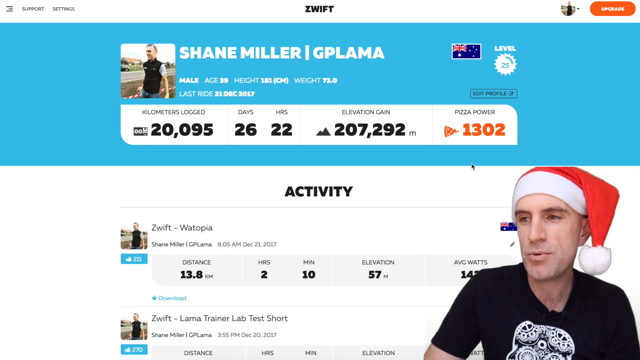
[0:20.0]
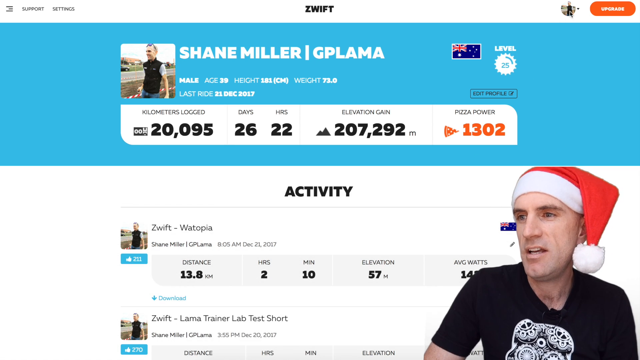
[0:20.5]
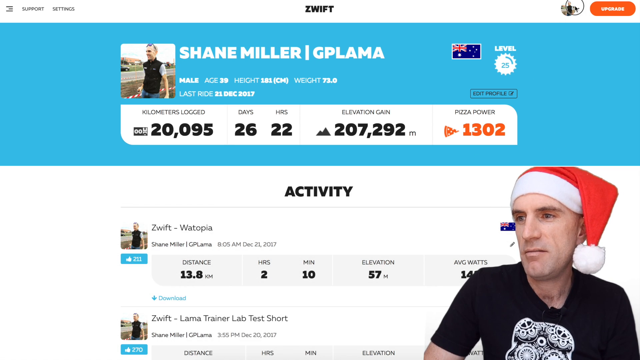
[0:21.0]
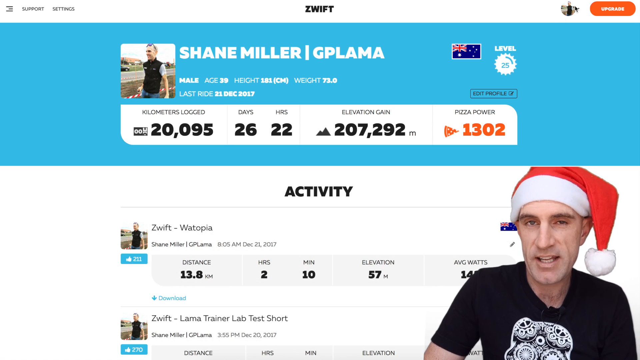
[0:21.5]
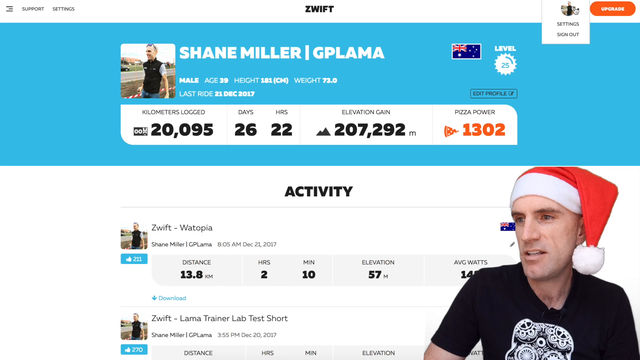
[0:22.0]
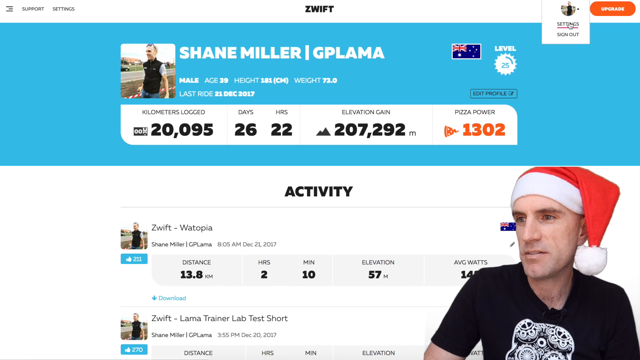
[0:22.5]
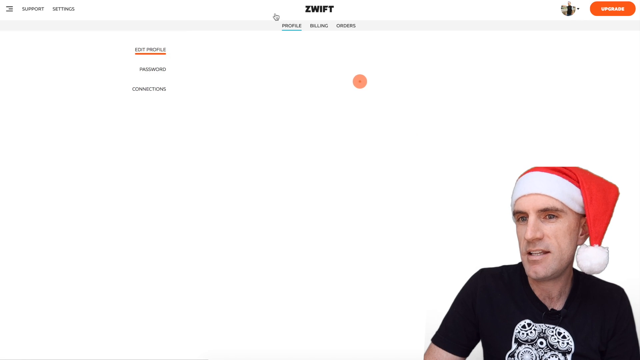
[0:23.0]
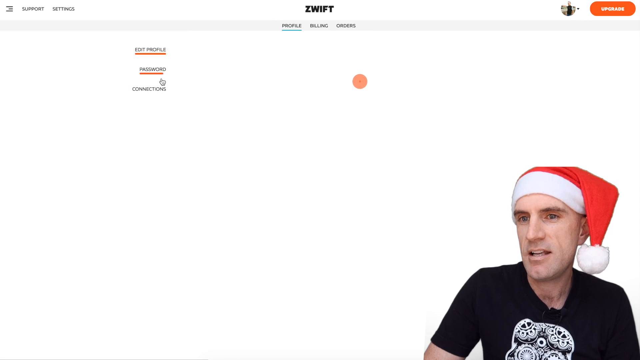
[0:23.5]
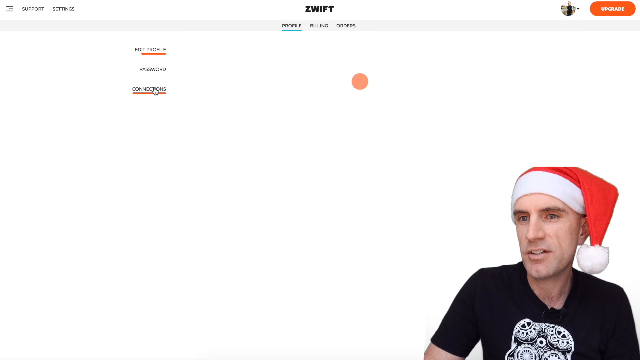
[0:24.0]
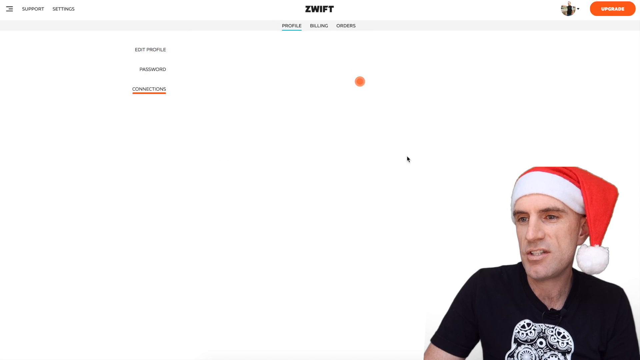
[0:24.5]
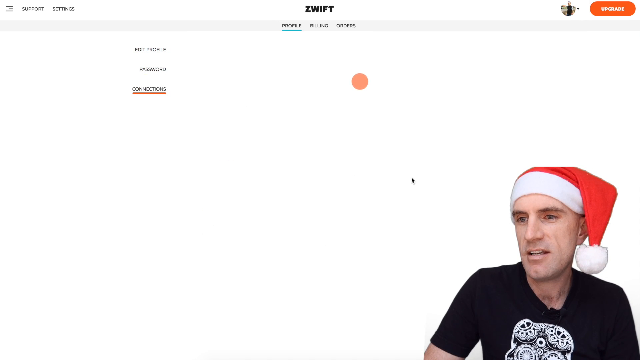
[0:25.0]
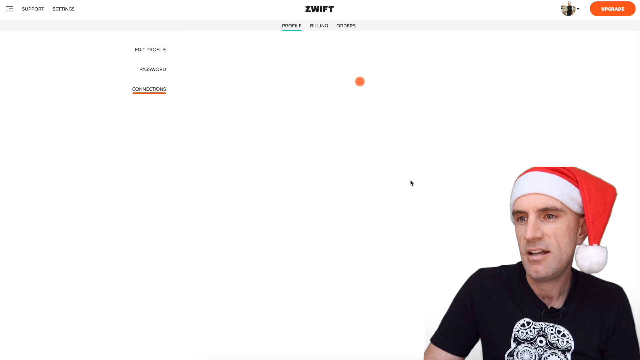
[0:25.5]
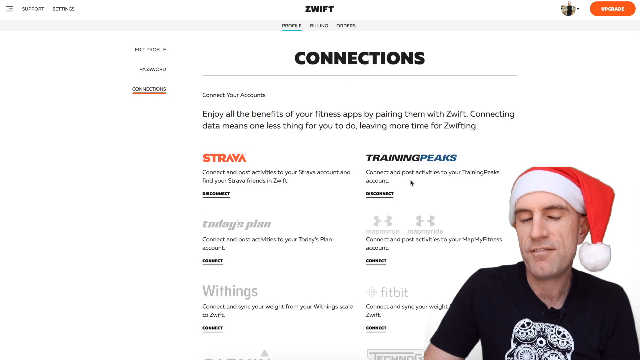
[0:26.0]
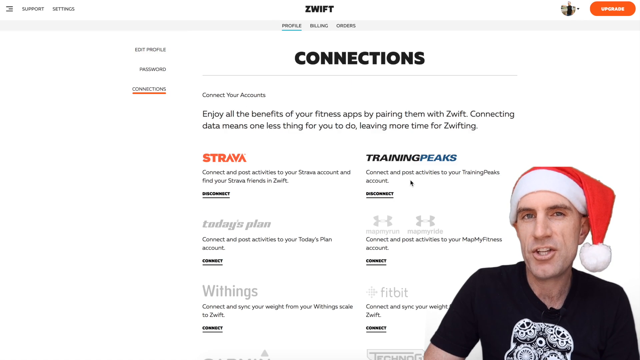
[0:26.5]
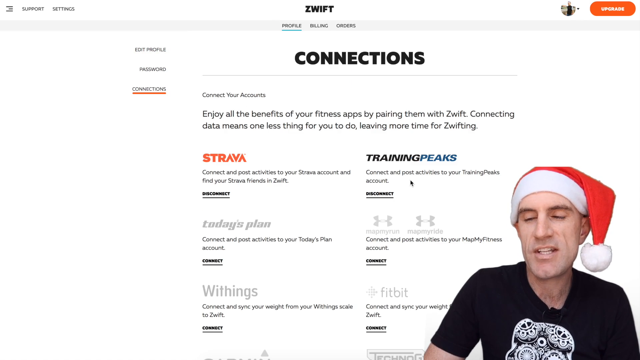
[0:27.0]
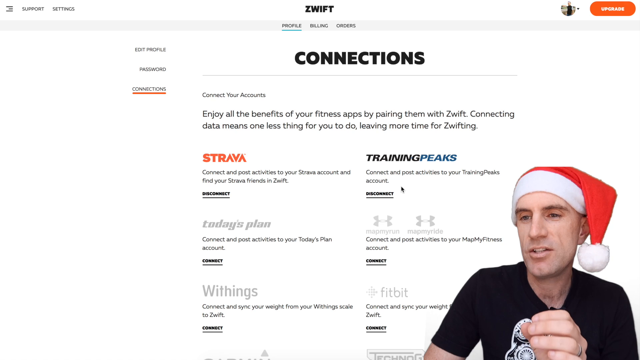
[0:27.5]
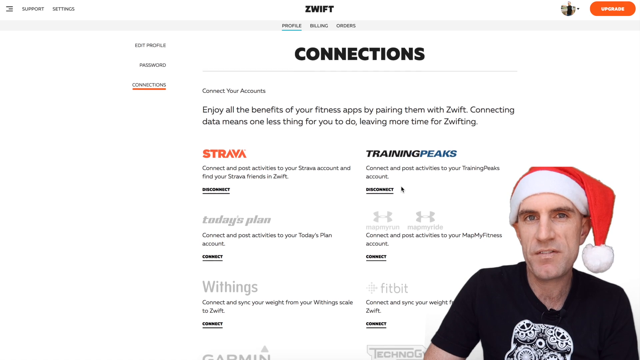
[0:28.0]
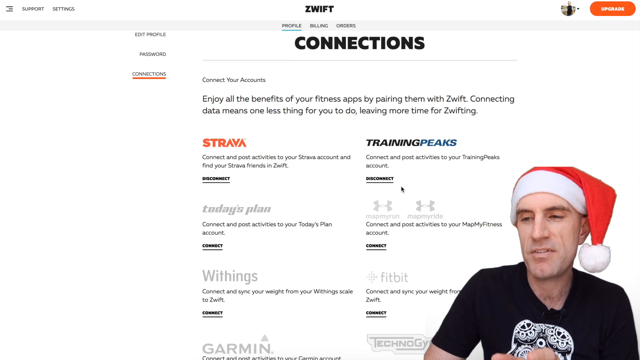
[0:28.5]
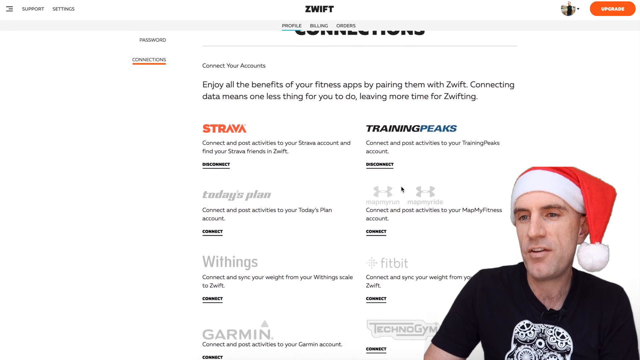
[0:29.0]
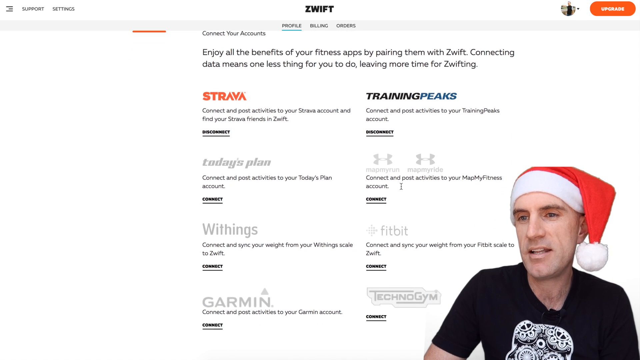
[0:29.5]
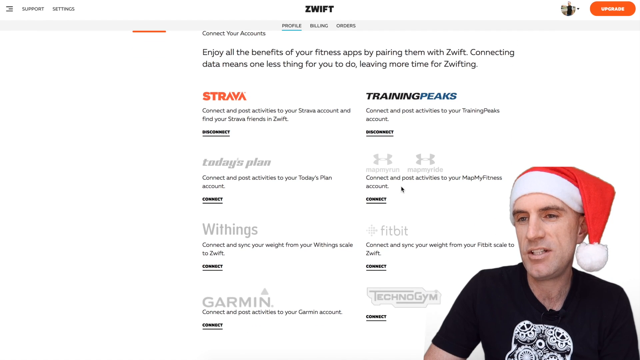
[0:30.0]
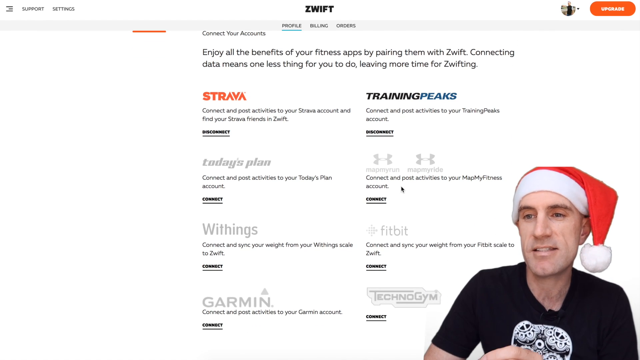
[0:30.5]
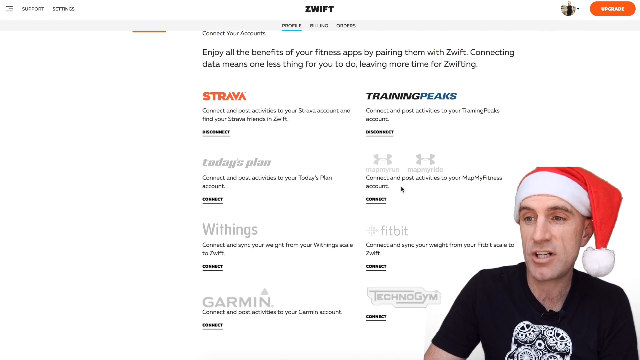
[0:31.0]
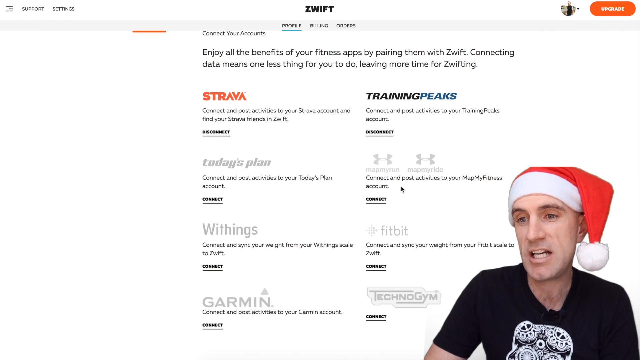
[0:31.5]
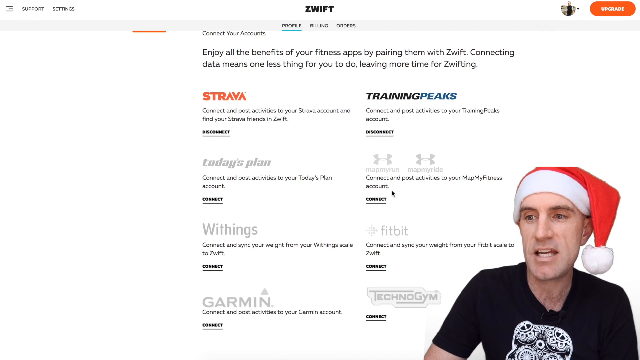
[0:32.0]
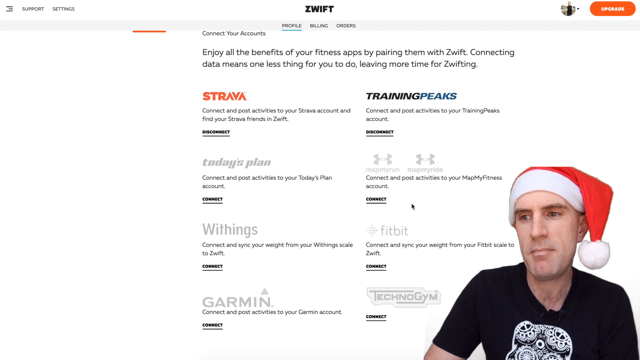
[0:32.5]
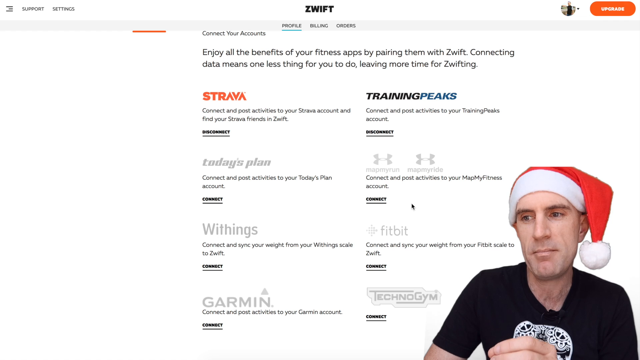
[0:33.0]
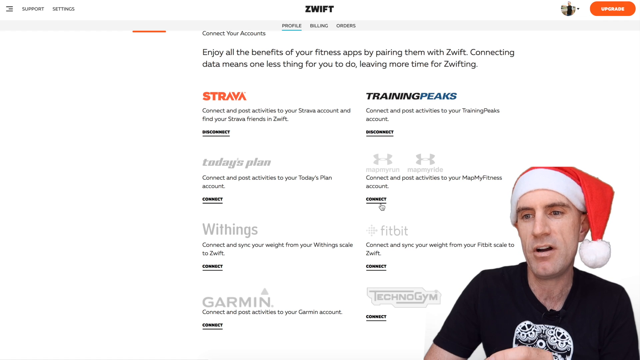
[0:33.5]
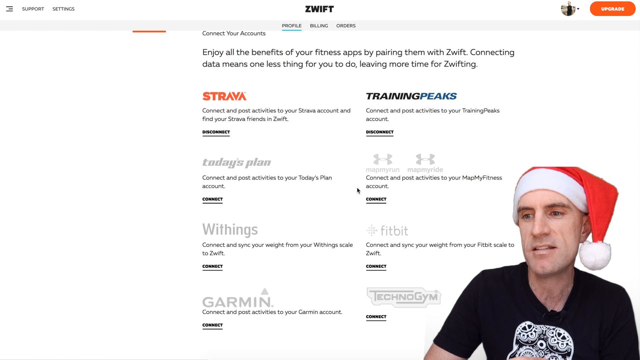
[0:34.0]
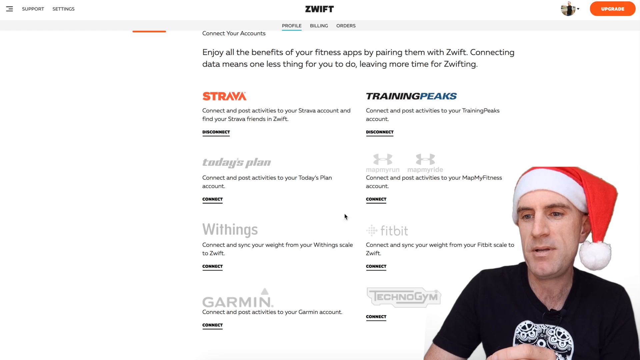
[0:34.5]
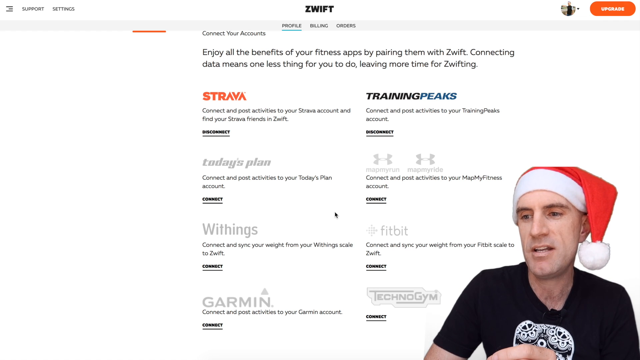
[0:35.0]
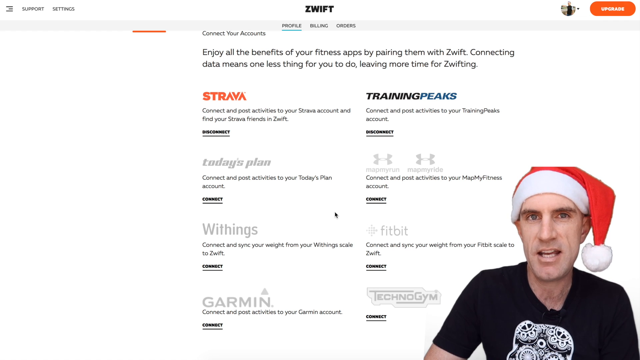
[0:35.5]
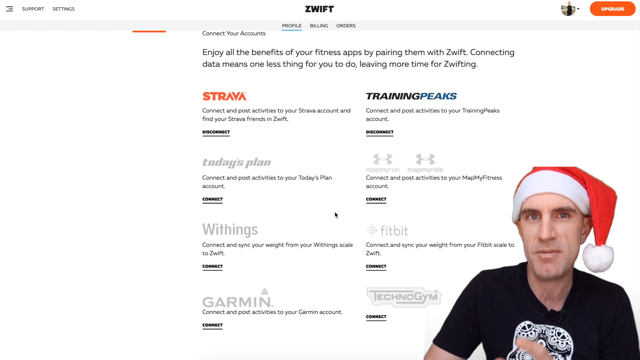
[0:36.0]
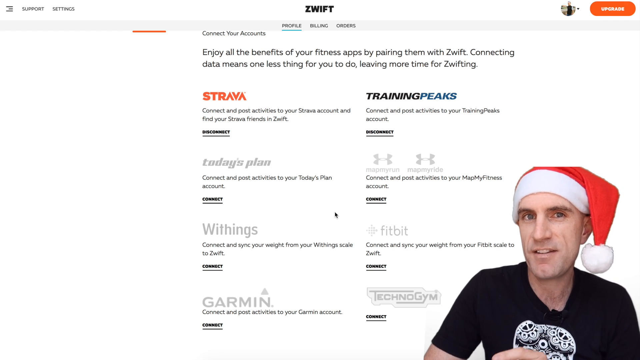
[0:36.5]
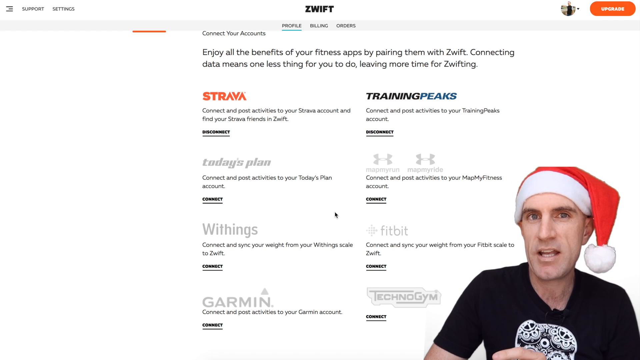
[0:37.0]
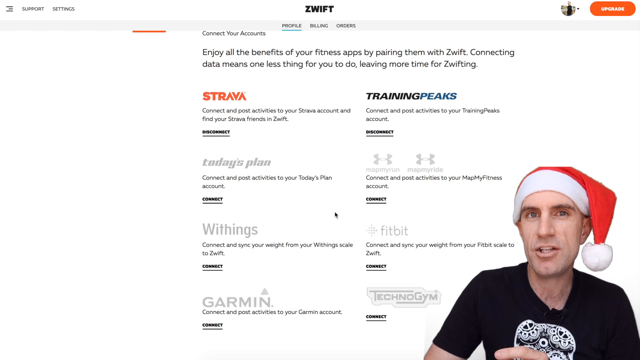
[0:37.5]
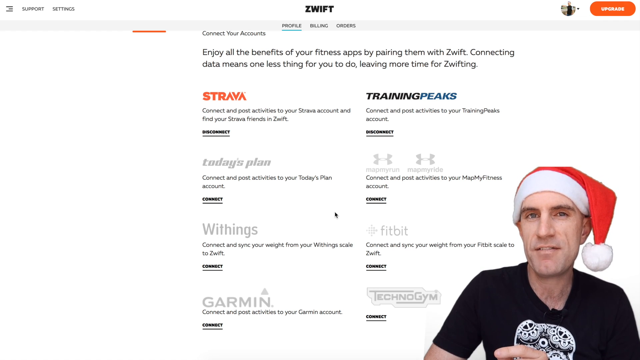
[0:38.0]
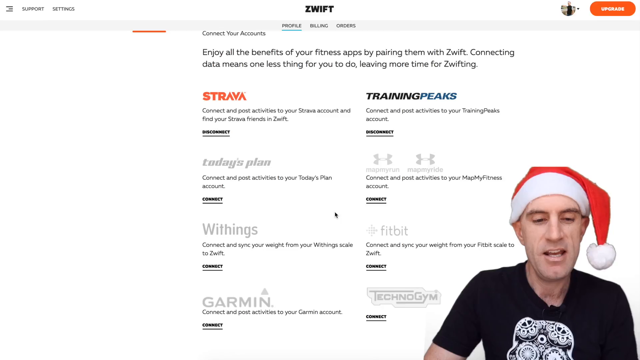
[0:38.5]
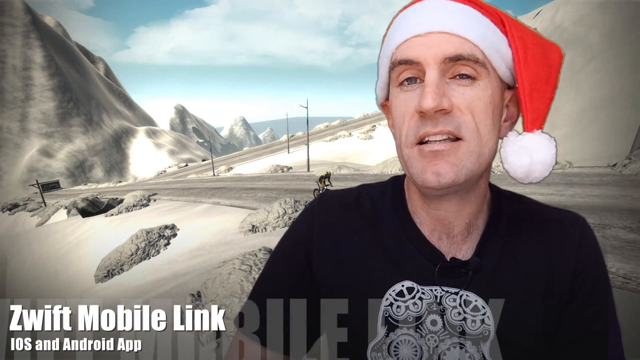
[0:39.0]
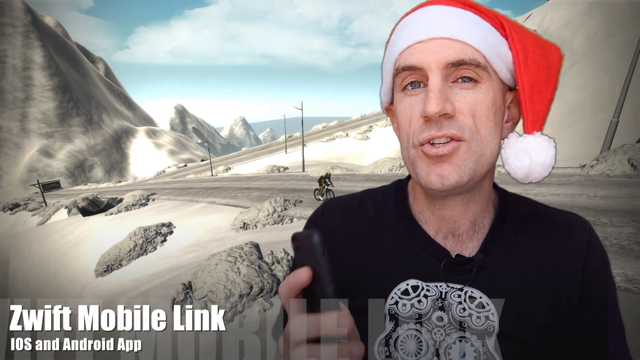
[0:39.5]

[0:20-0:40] The same website stays on the green screen, and the man has made himself smaller, now just in the corner of the screen. Text on the website says "enjoy the benefit of your fitness apps by pairing them with Zwift", so it appears to be a fitness website, Zwift, that apparently brings data from fitness apps such as Strava, Garmin, Training Peaks and Fitbit into one place; he seems to be showing how to use it. At the very end, he replaces the website with a different nature image on the green screen: a wintery, cold, snowy road.